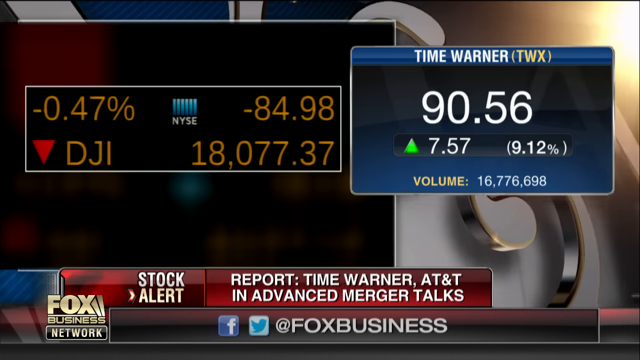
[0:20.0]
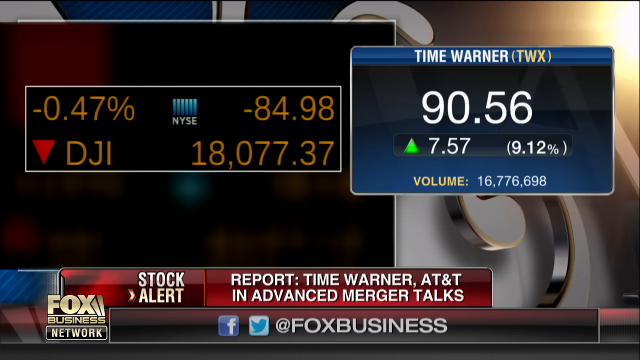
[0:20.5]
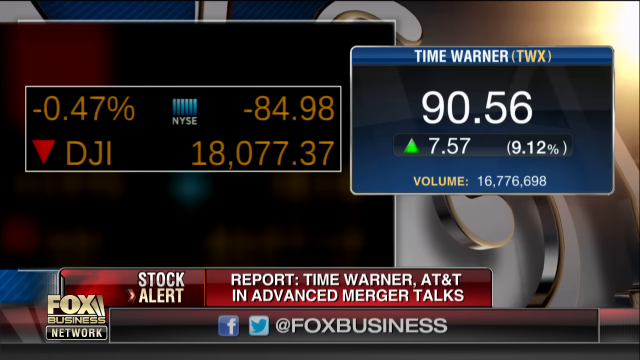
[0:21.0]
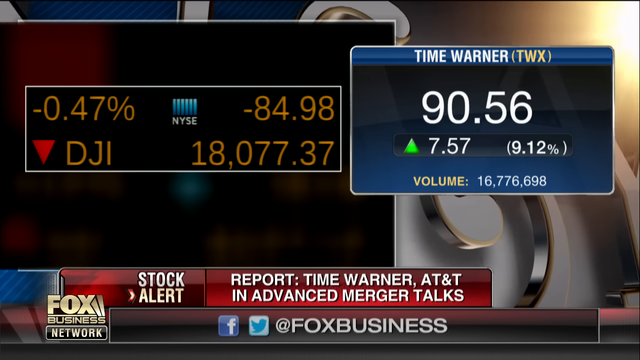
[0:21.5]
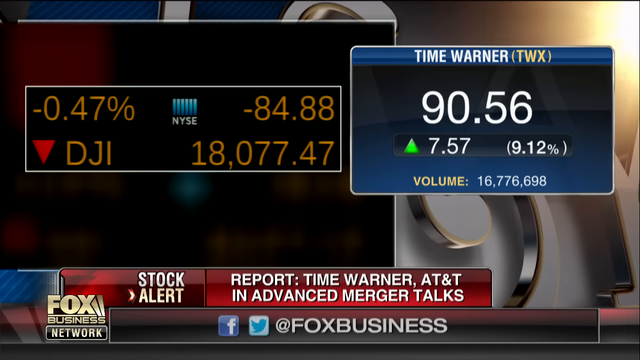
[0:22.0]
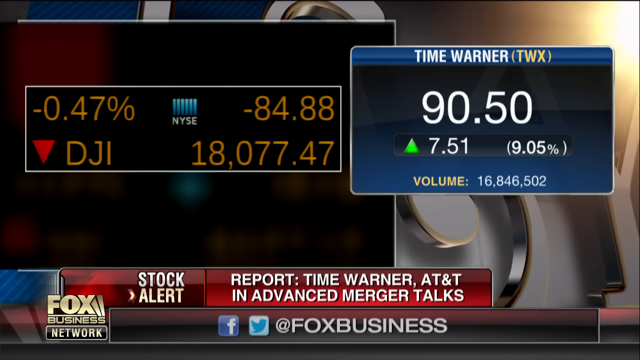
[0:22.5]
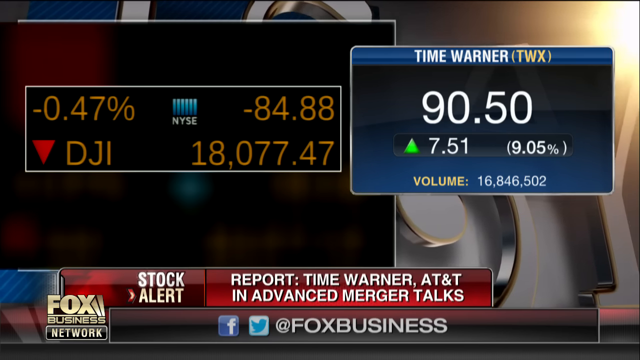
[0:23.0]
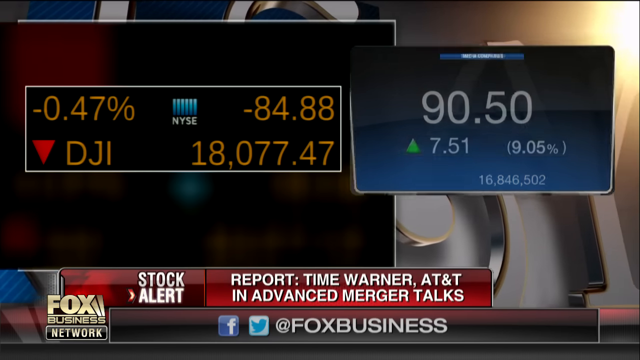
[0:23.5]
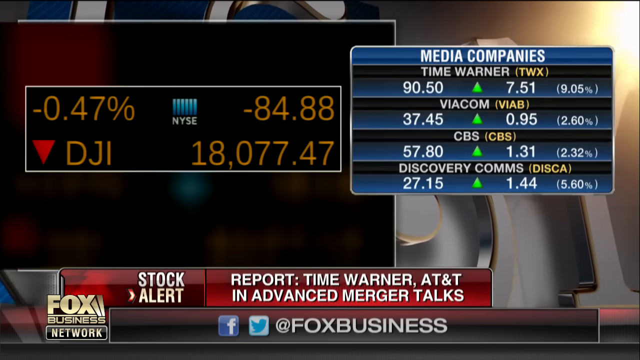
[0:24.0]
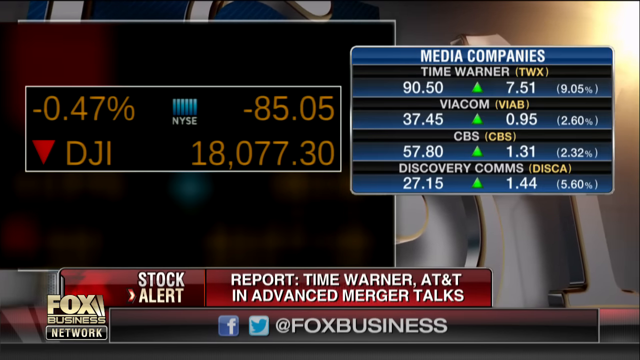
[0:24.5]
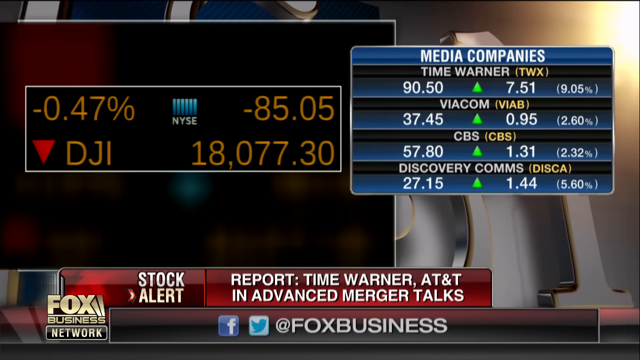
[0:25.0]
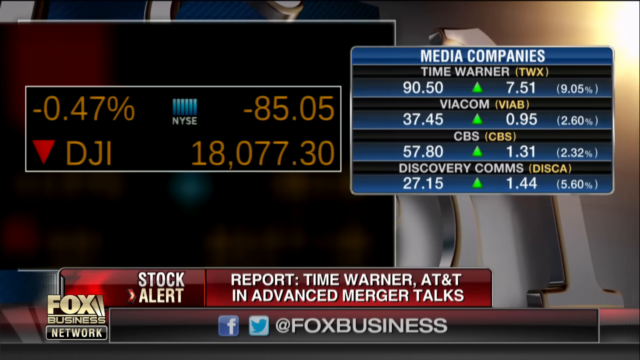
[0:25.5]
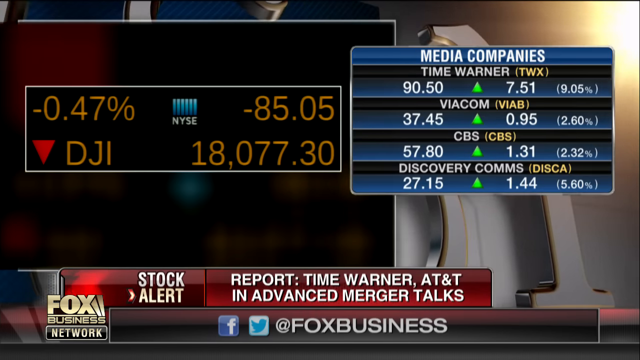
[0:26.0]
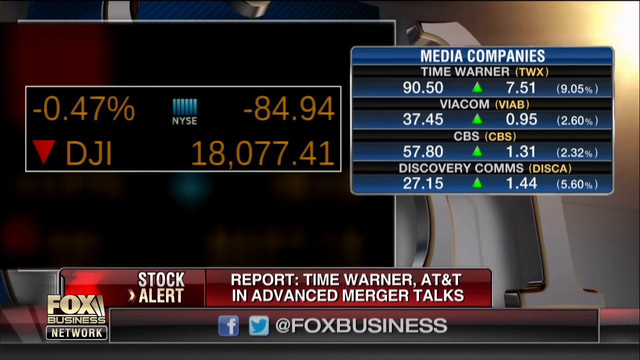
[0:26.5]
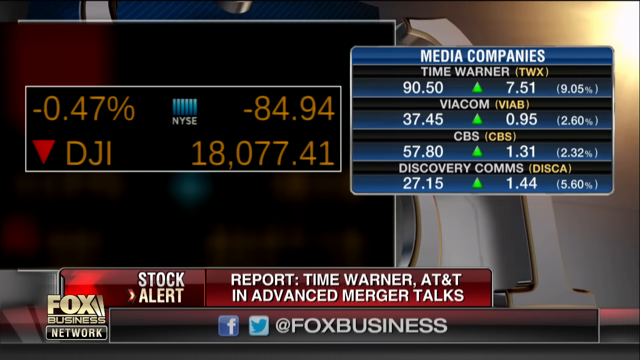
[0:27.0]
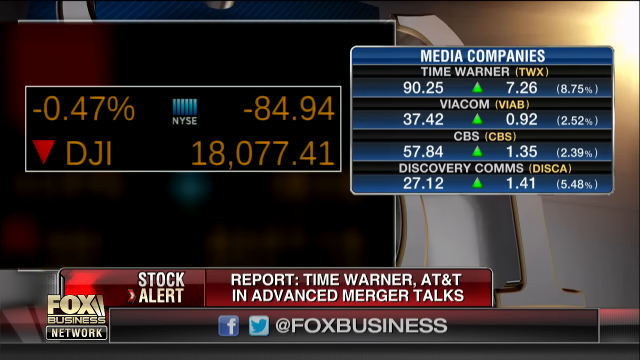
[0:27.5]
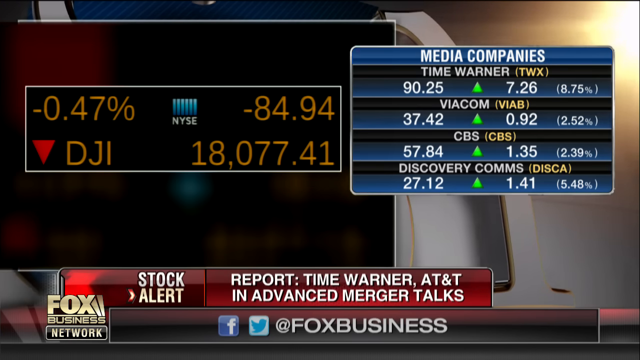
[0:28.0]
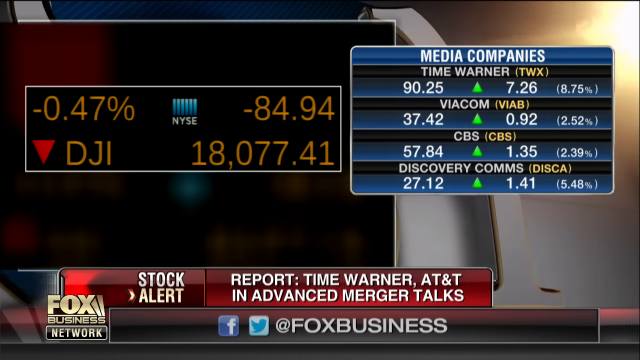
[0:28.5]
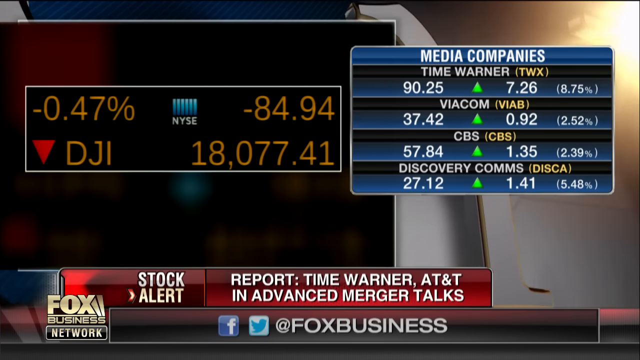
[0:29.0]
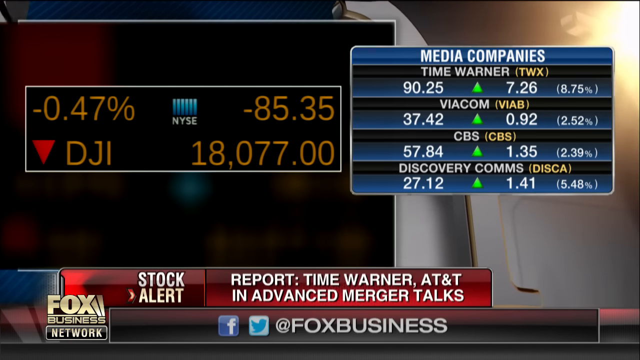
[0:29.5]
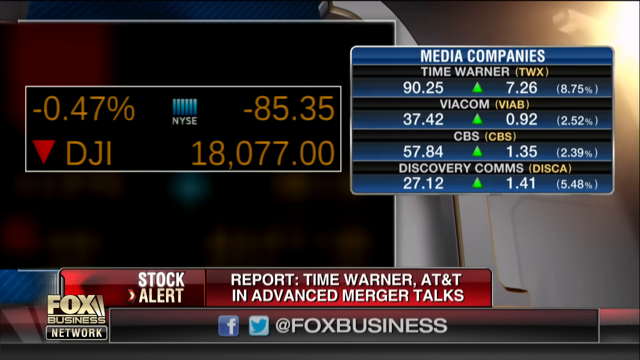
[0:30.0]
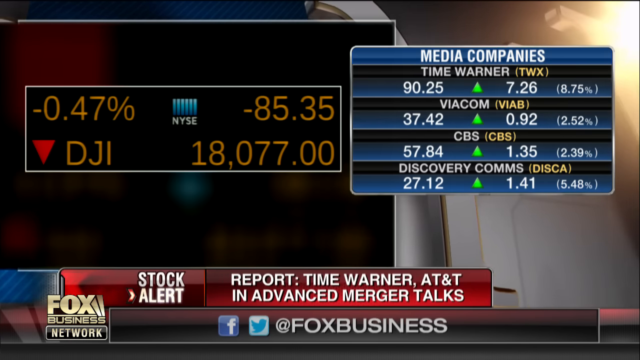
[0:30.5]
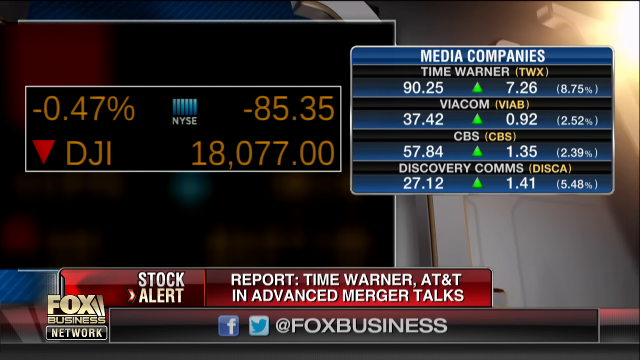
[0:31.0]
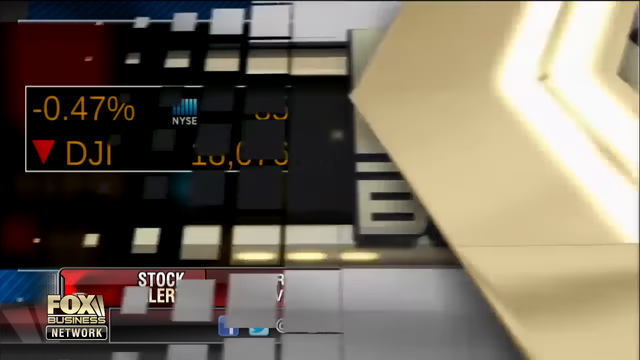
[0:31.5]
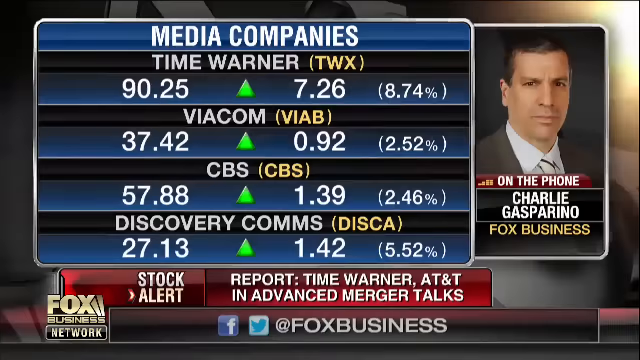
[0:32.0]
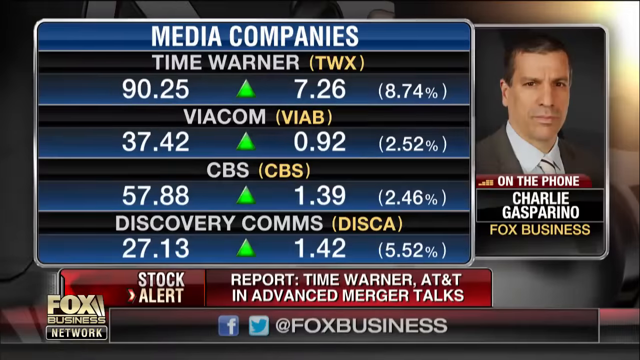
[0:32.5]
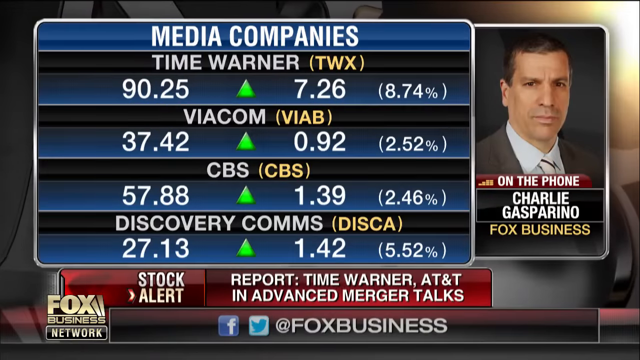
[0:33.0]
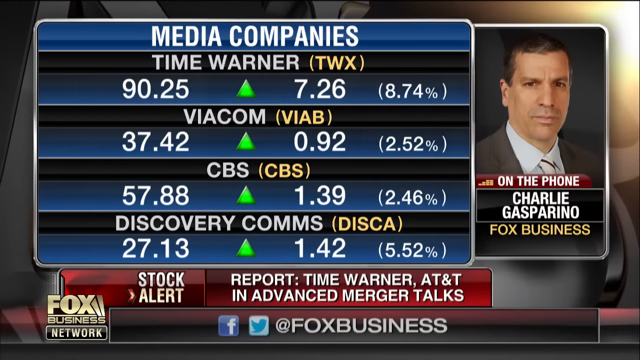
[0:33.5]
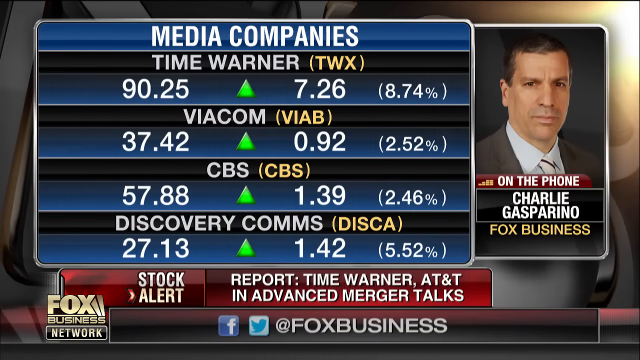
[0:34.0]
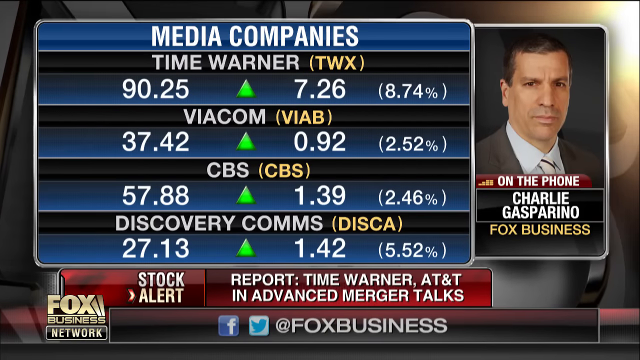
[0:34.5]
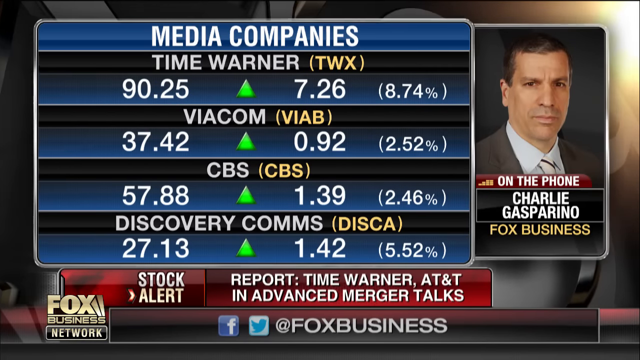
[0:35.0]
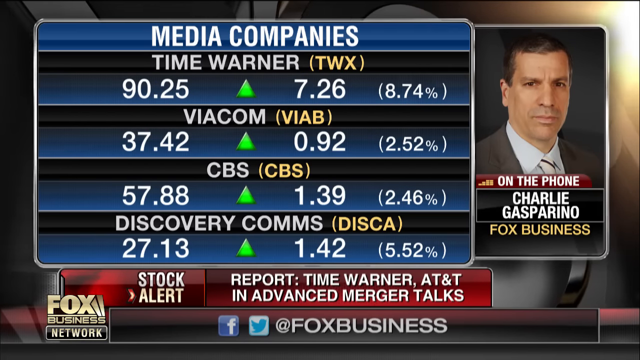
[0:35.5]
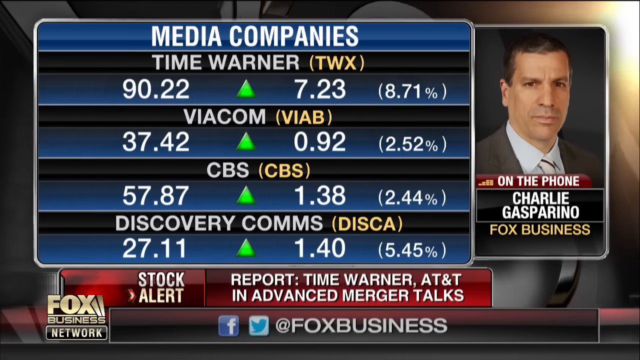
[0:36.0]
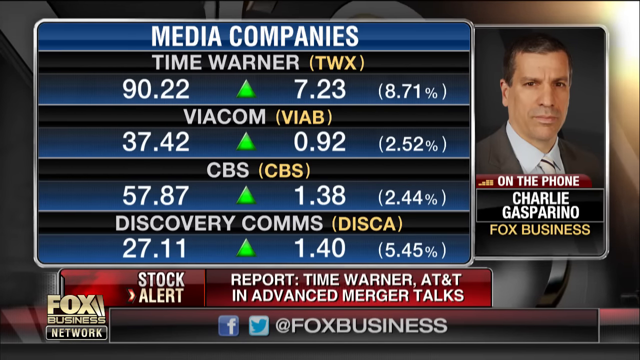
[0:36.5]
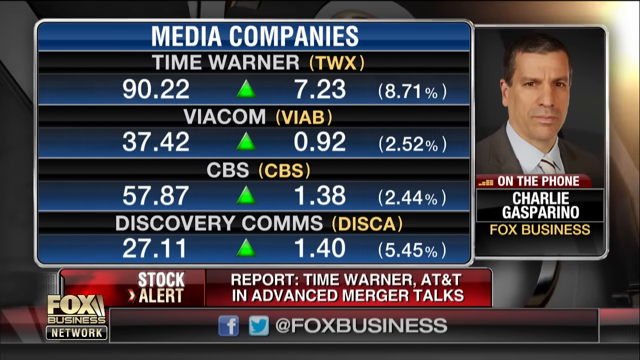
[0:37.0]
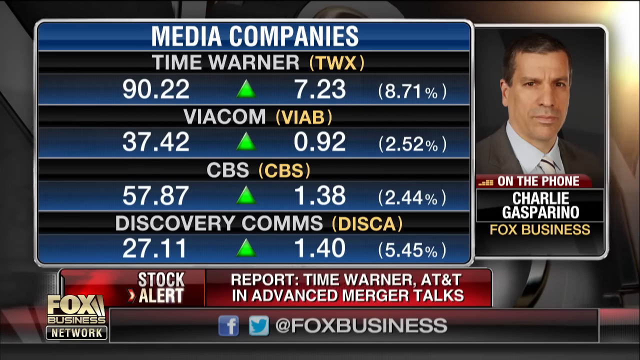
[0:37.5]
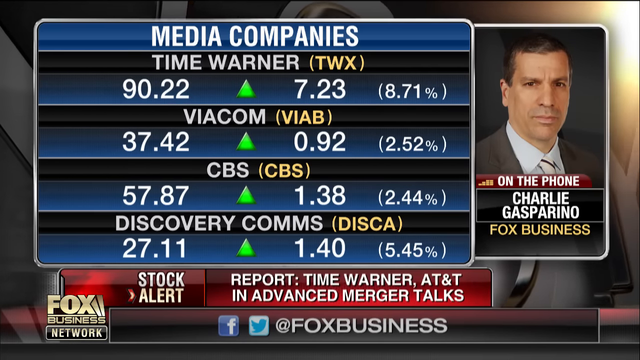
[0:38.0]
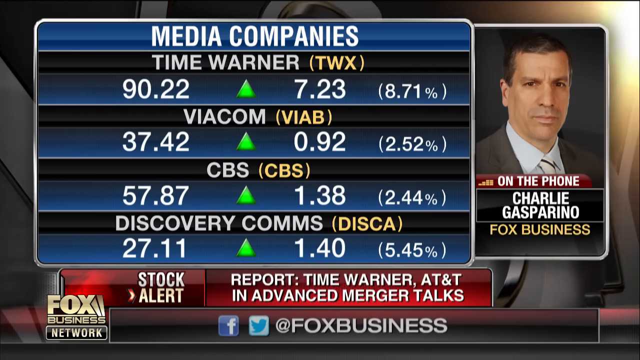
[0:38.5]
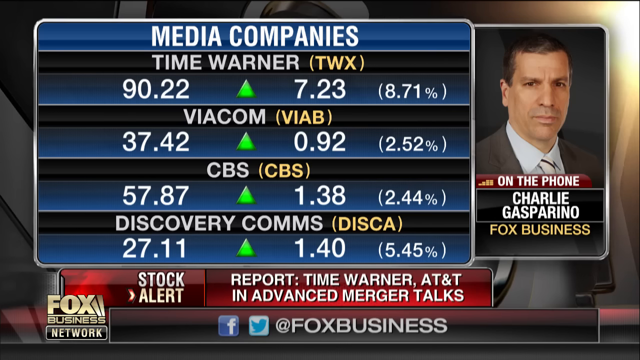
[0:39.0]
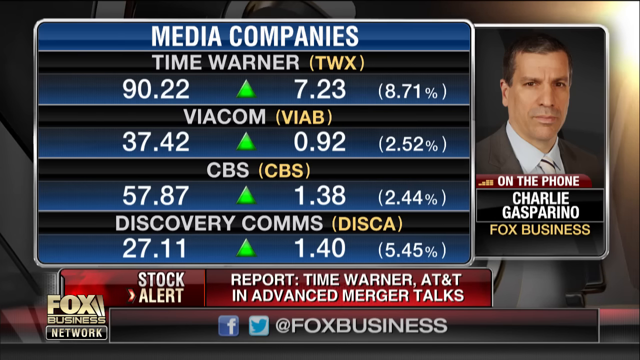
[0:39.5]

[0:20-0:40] The right window with the Time Warner stock flips to a window titled "Media Companies," with a summary of four stocks underneath. The first is Time Warner at 90.50, up 7.51, with 9.05 in parentheses. Second is Viacom, VIAB, at 37.45, up .95, with 2.60% in parentheses. Next is CBS at 57.80, up 1.31, with 2.32% in parentheses. The fourth row is Discovery Coms, Disc A, at 27.15, up 1.44, with 5.60 in parentheses. These numbers and the NYSE window on the left all fluctuate slightly. A large Fox Business logo then comes in from the right and swaps to a larger version of the Media Companies window, now on the left of the screen. To its right is another window showing a man with dark skin and short hair in a gray suit, white shirt and white striped tie. Beneath him is a small, dark red, somewhat curved section containing the text "on the phone," under that a black rectangle reading "Charlie Gasparino," and under that "Fox Business" in yellow. The numbers on the left fluctuate again.